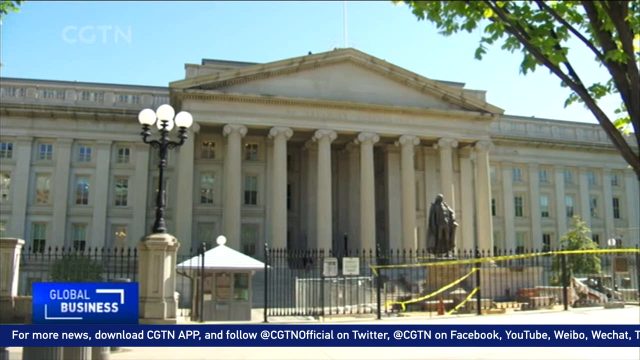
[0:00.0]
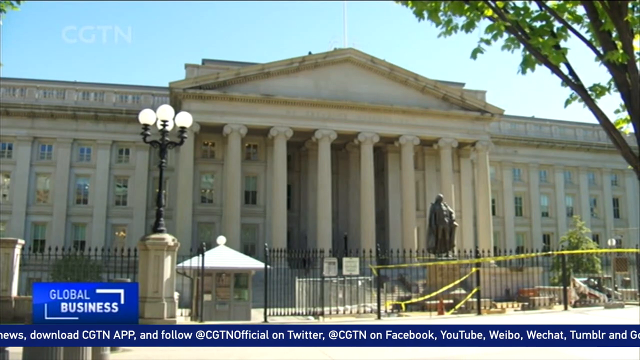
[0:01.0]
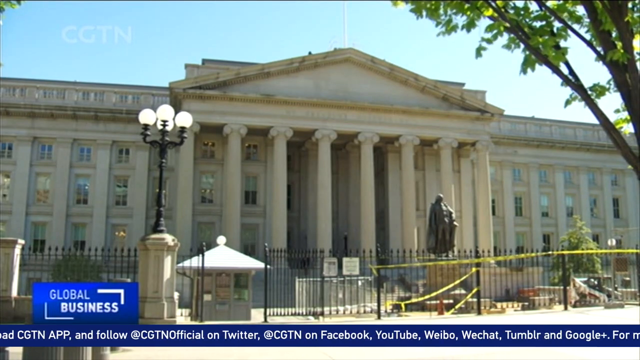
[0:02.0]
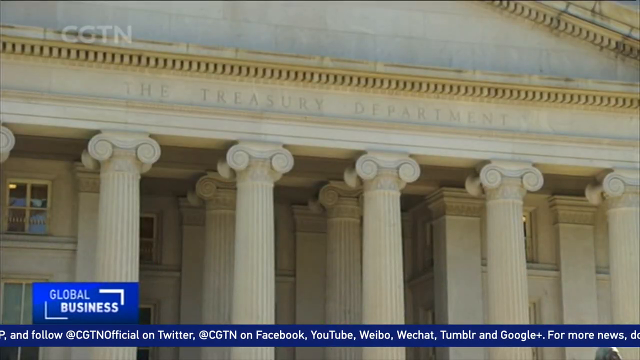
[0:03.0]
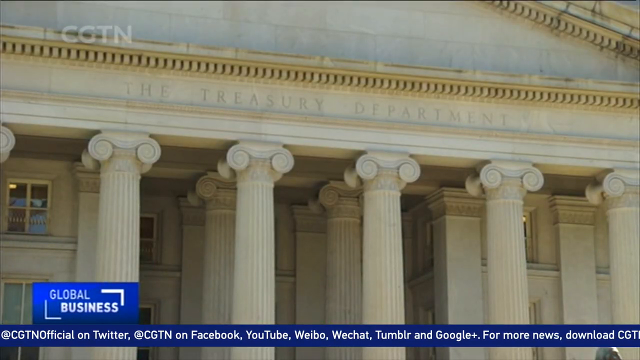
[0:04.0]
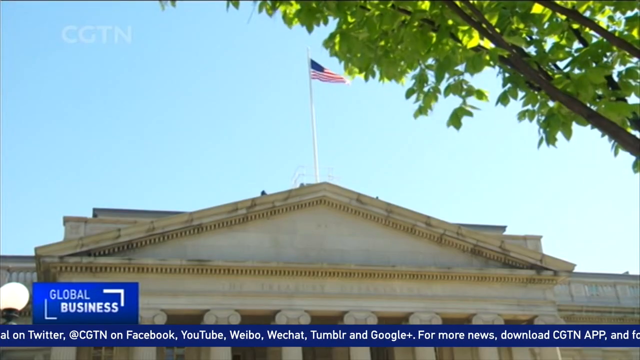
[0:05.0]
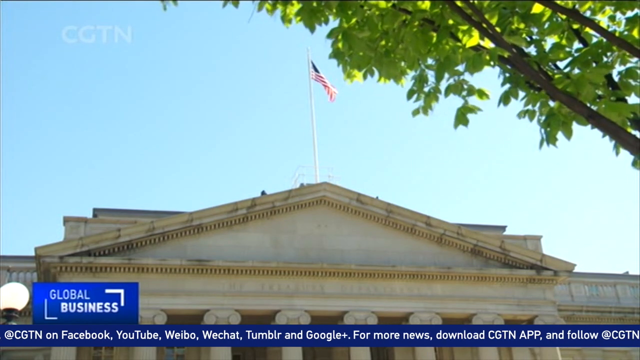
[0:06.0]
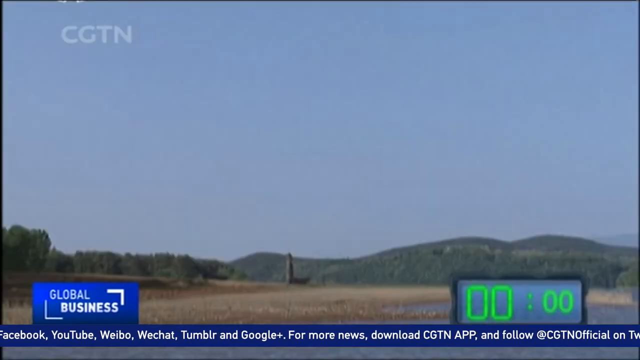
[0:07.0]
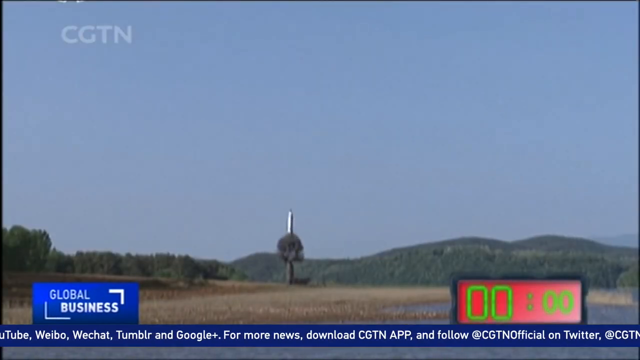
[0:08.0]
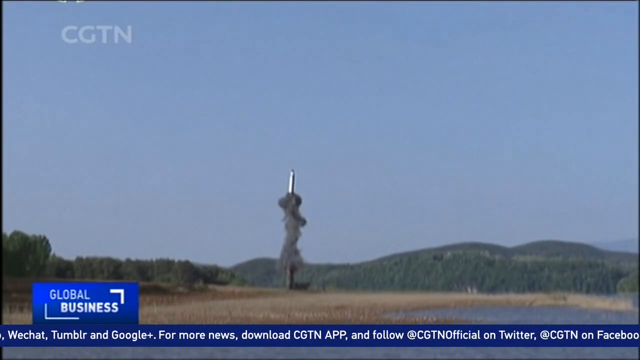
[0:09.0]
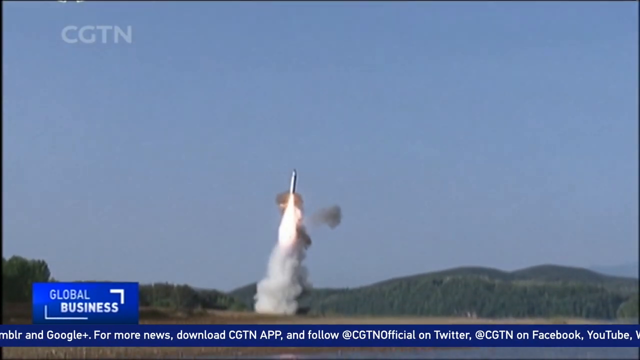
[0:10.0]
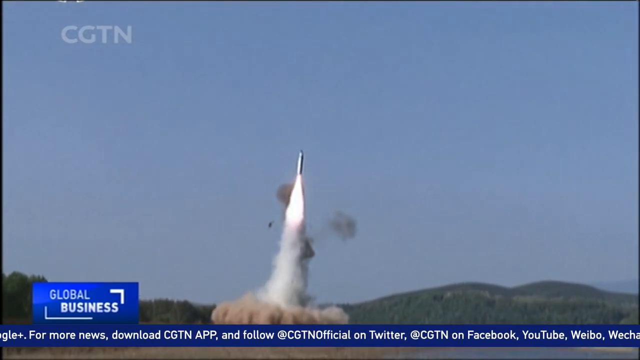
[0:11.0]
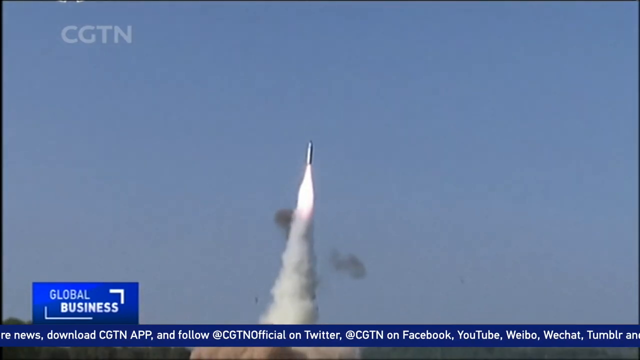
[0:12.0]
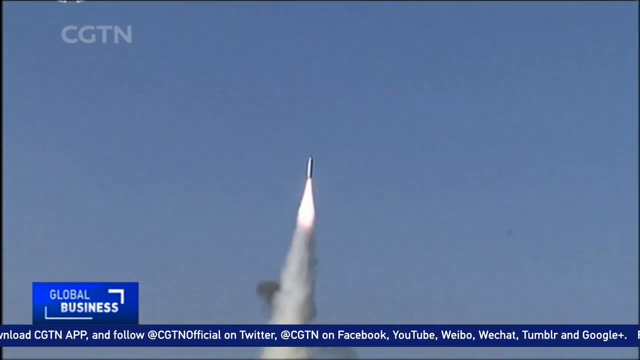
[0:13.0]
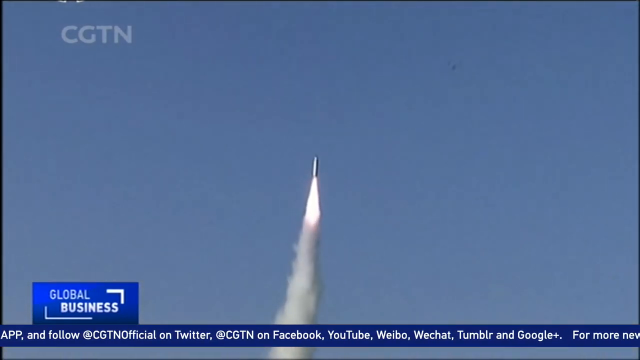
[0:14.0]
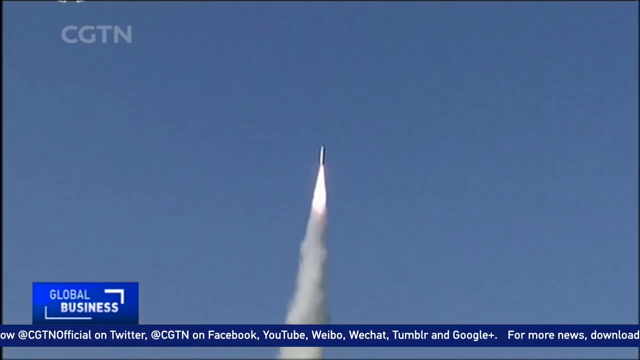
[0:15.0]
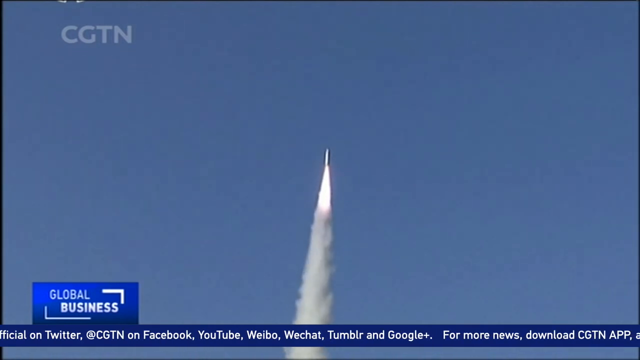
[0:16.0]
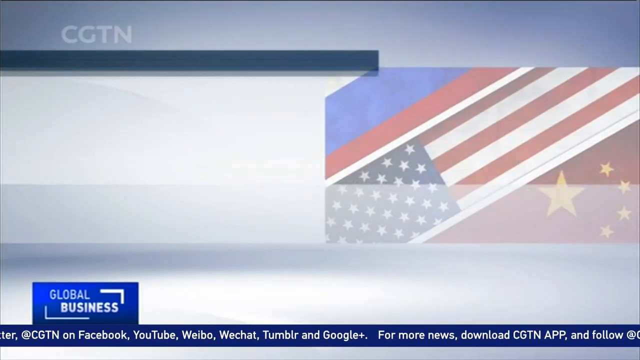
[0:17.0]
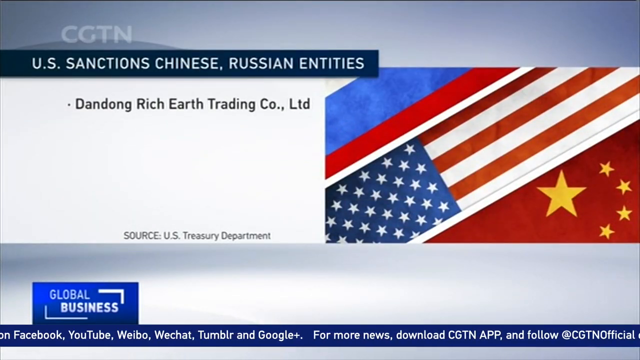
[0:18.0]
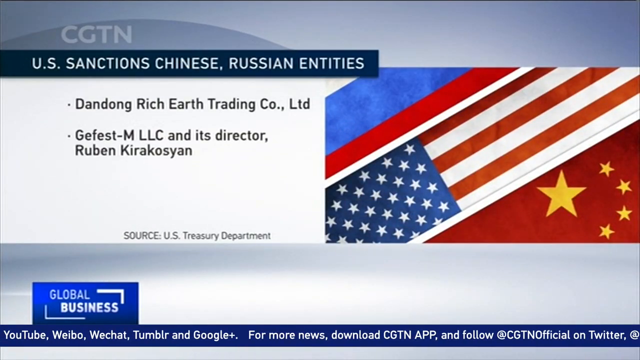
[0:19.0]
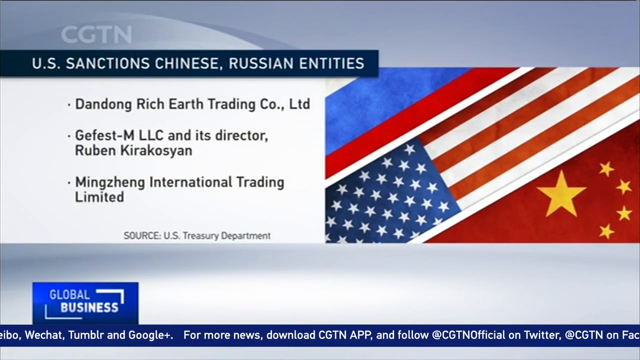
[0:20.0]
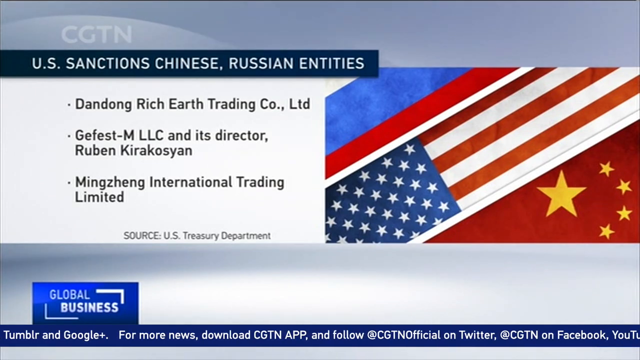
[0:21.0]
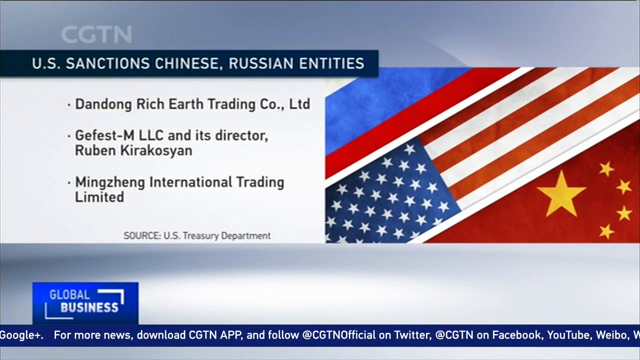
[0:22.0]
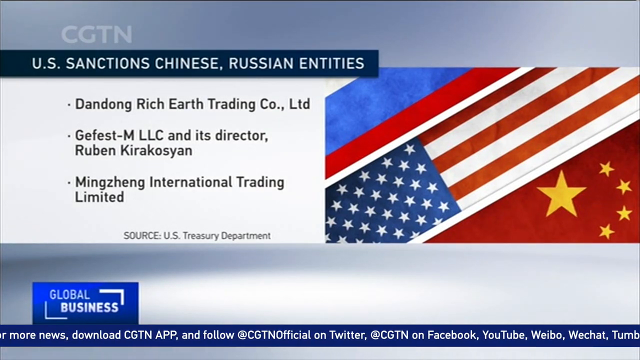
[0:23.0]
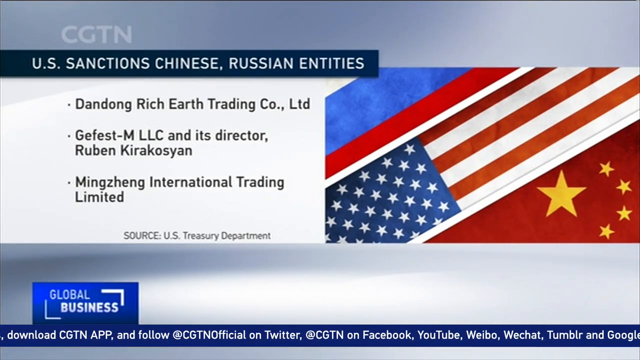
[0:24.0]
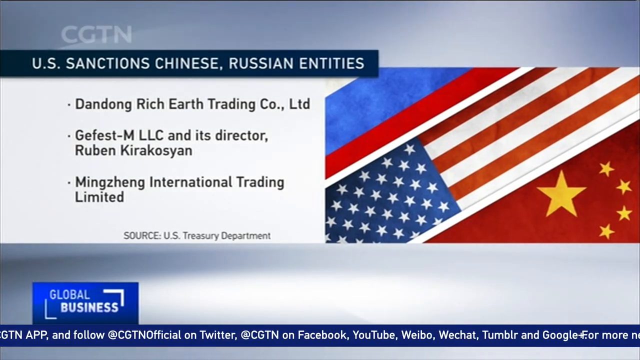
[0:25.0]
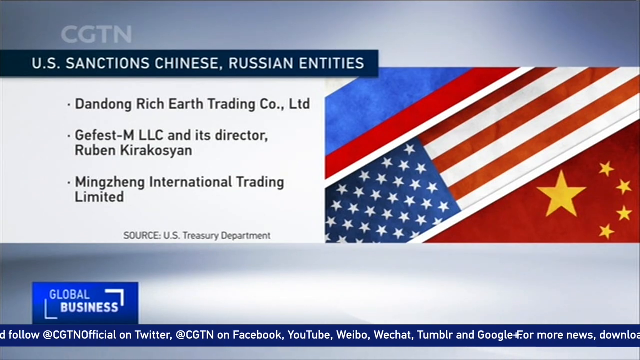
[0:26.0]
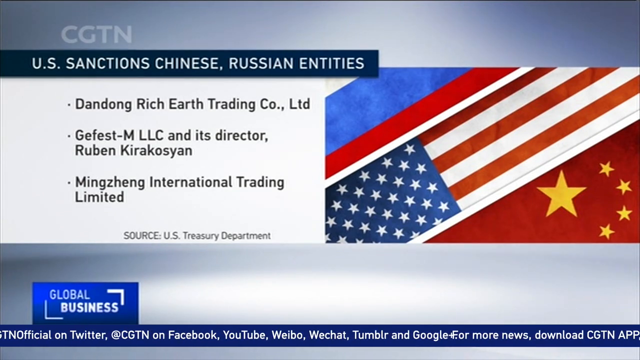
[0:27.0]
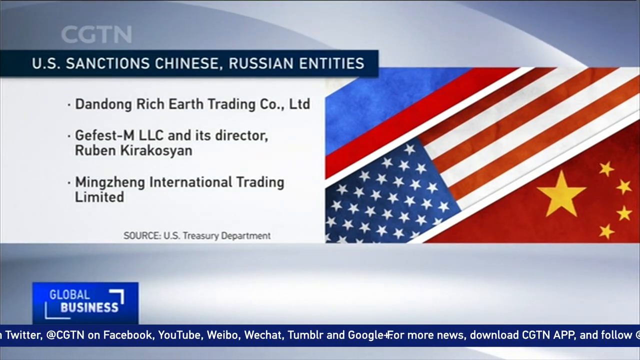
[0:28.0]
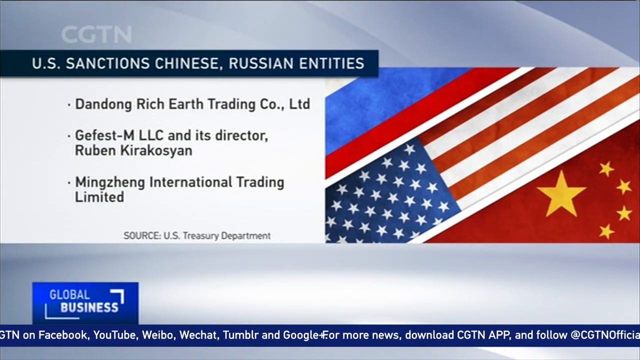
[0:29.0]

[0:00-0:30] This is a news report on the CGTN network. It opens with a rocket on the ground that takes off and flies up into the air. The report then cuts to an image whose right-hand side appears to show symbols from different countries: the United States stars, red stripes, and yellow stars. Text at the very top reads "U.S. sanctions Chinese-Russian entities" and lists "Dandong Rich Earth Trading Company Limited", "GFESMLLC and its director Ruben Tyrakeisen", and third, "Minzhang International Trading Limited". Text also reads "source U.S. Treasury Department". In the lower left-hand corner is the text "global business", and along the very bottom a ticker scrolls across reading "follow CGTN on Facebook, Twitter, YouTube".